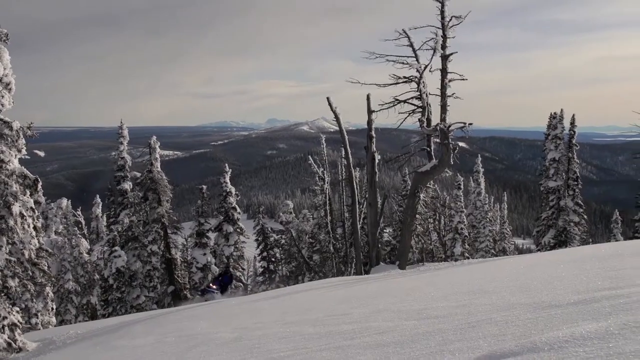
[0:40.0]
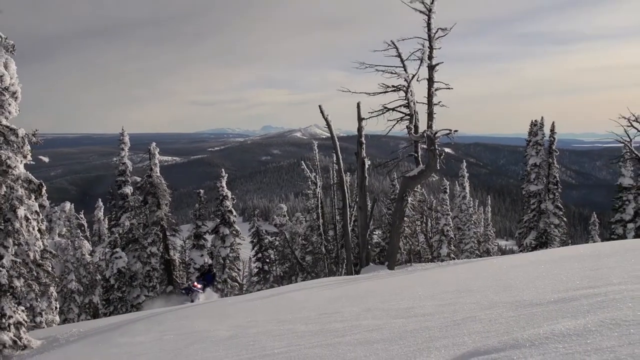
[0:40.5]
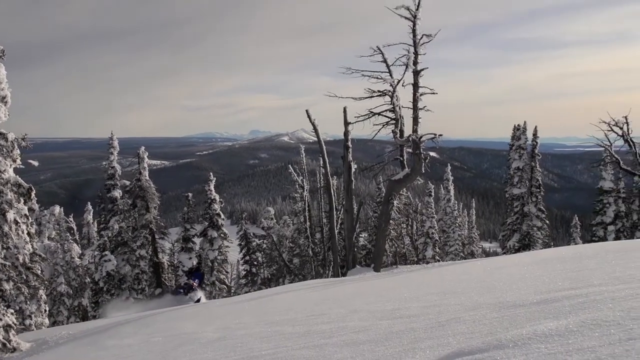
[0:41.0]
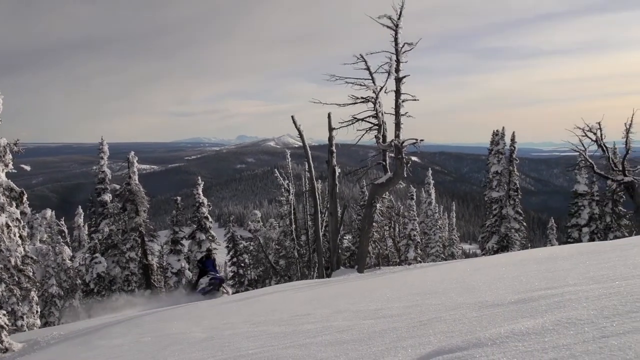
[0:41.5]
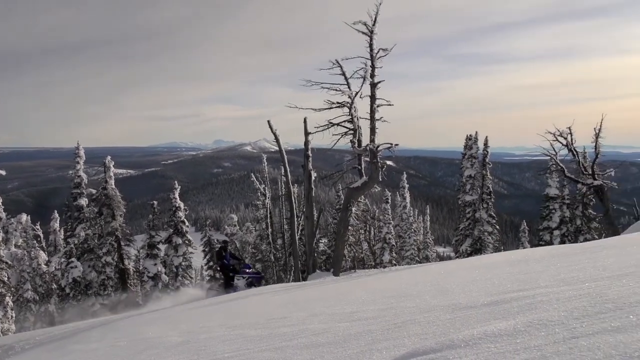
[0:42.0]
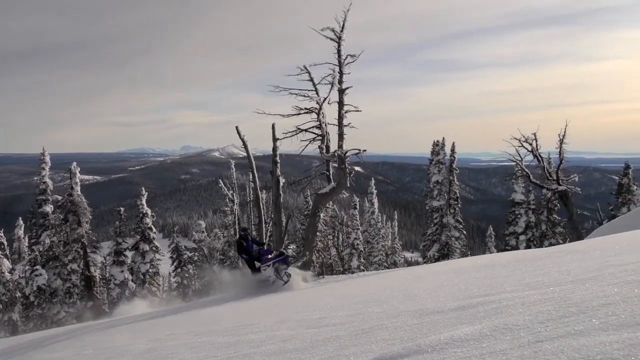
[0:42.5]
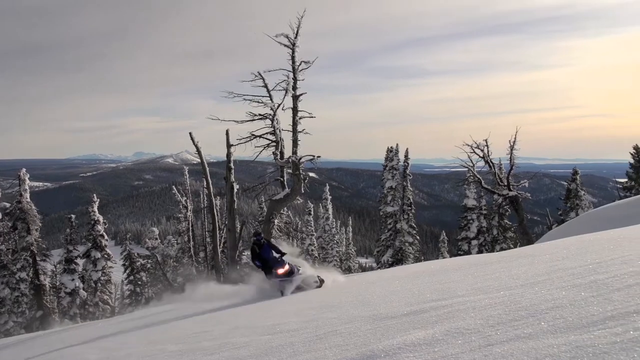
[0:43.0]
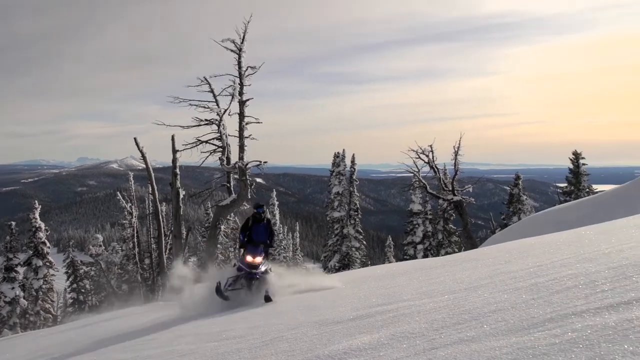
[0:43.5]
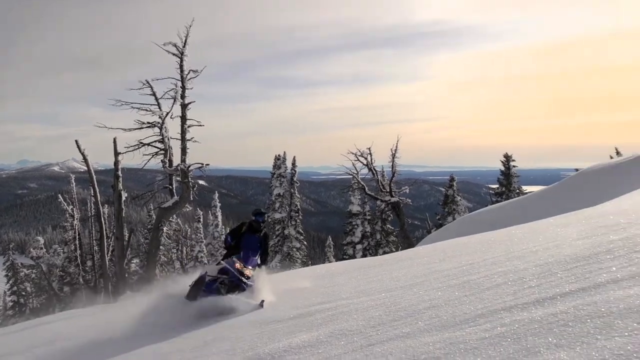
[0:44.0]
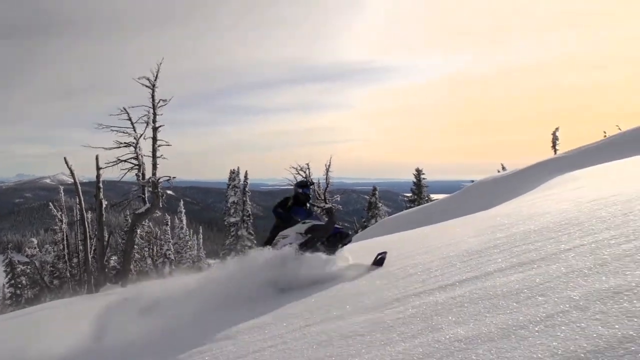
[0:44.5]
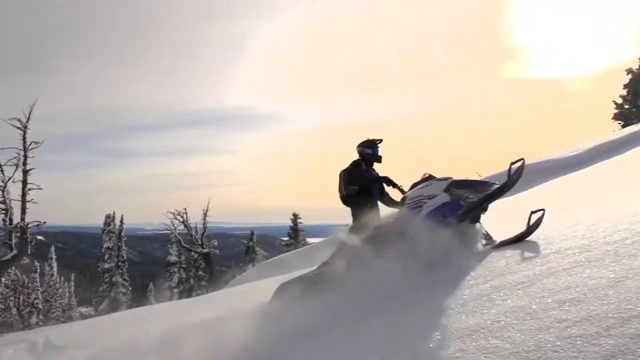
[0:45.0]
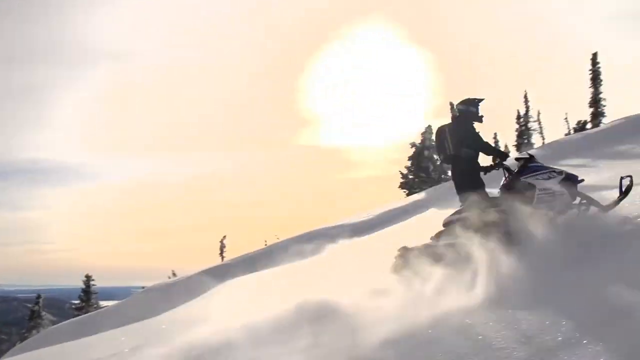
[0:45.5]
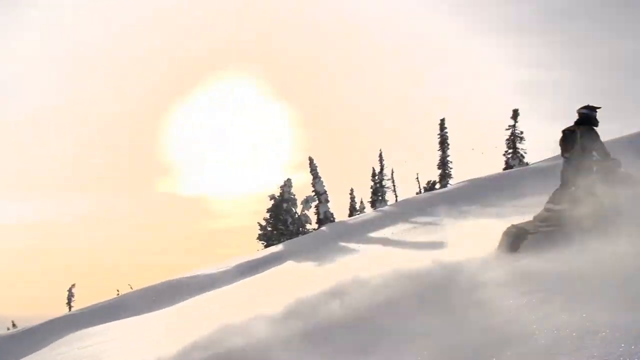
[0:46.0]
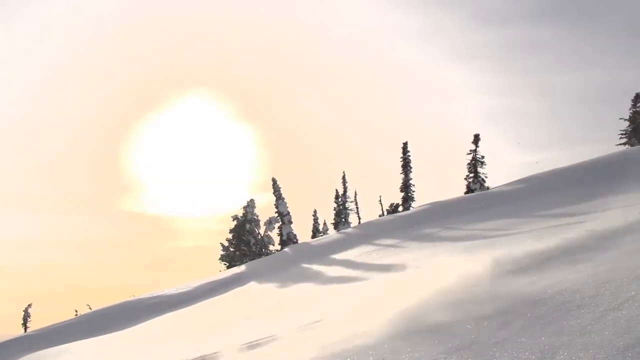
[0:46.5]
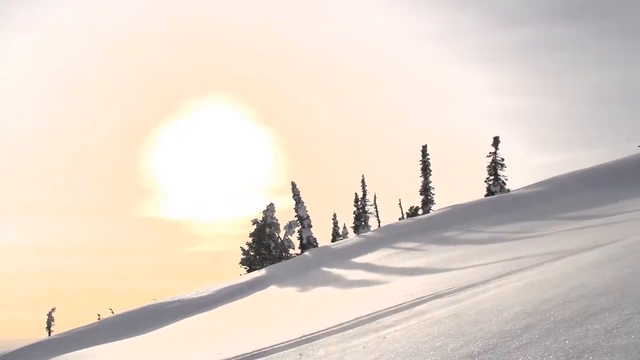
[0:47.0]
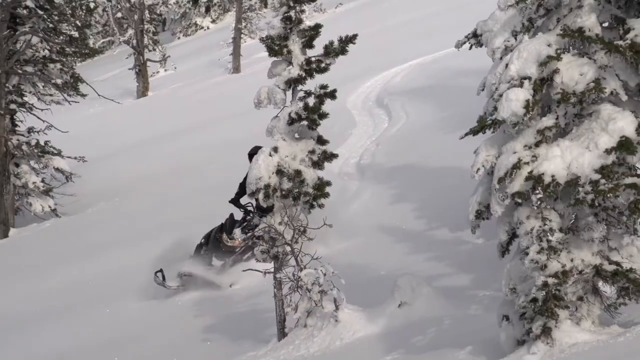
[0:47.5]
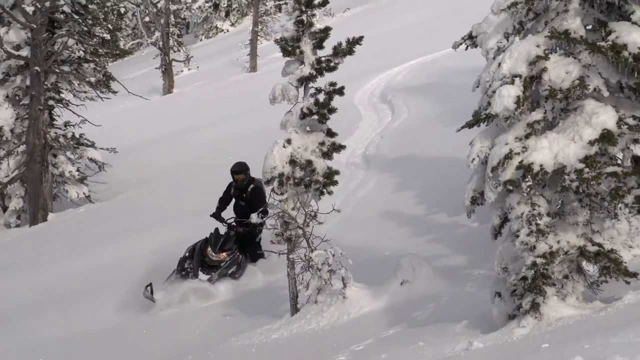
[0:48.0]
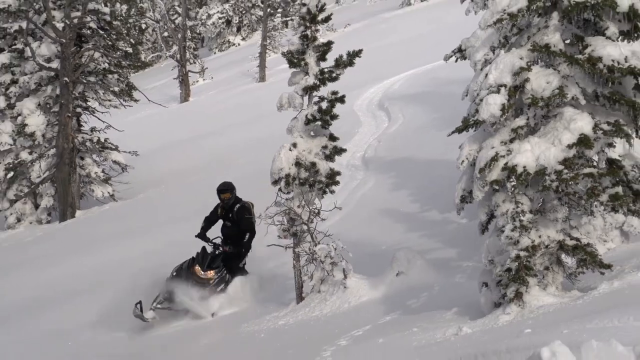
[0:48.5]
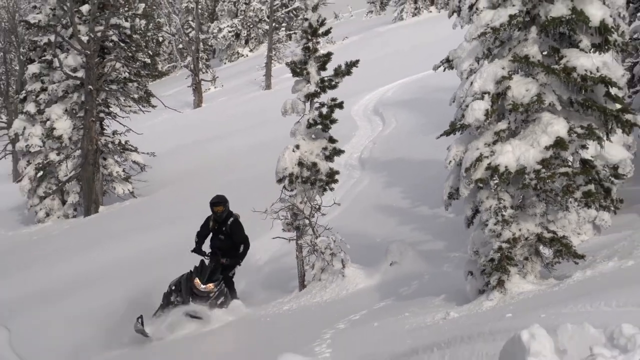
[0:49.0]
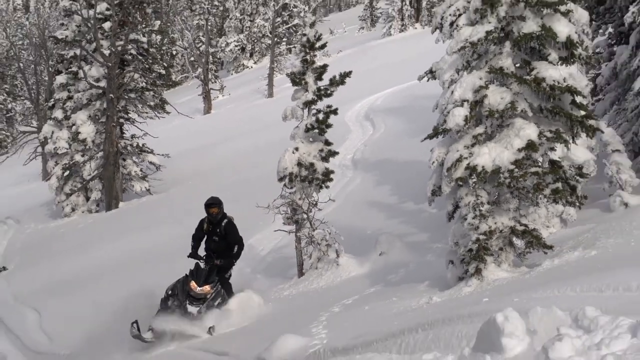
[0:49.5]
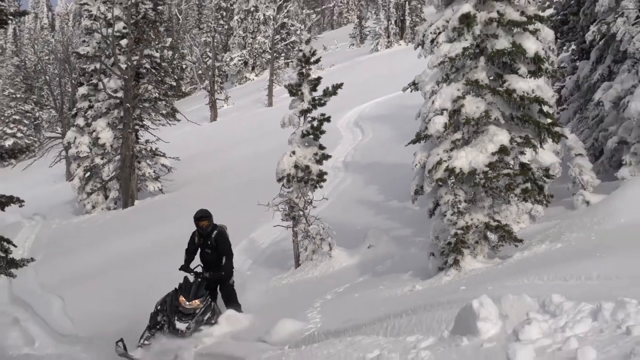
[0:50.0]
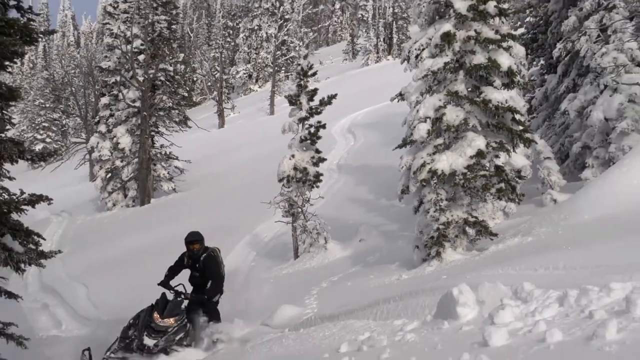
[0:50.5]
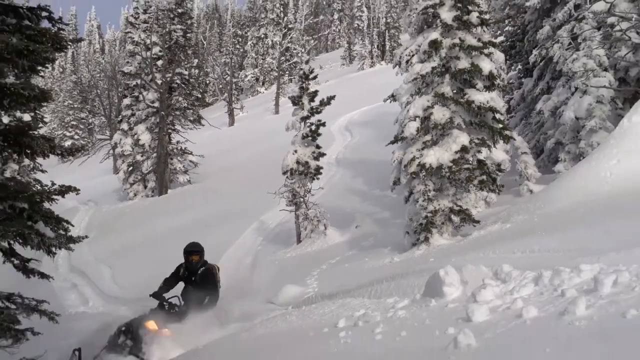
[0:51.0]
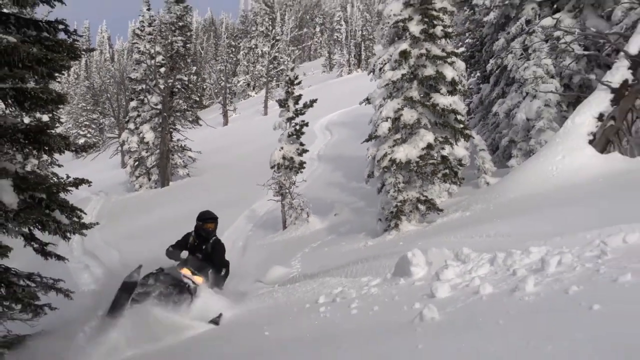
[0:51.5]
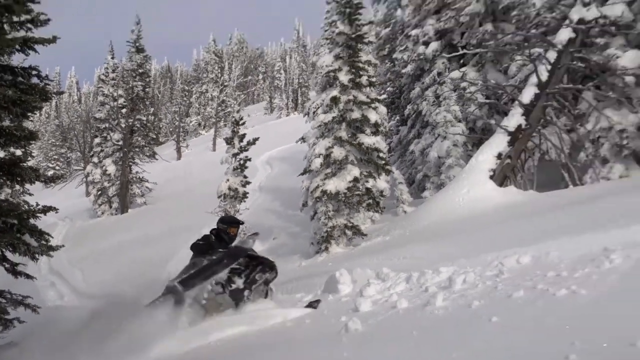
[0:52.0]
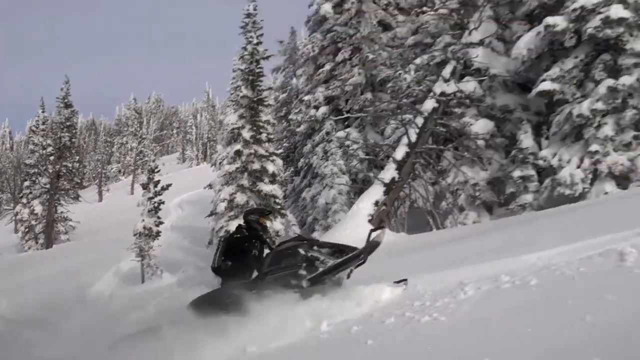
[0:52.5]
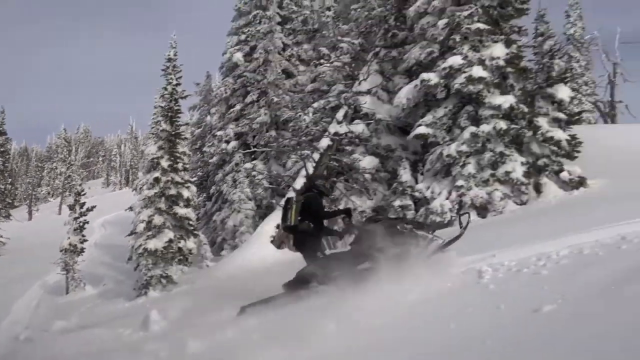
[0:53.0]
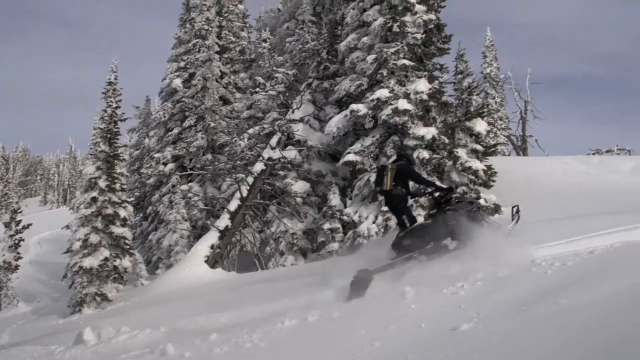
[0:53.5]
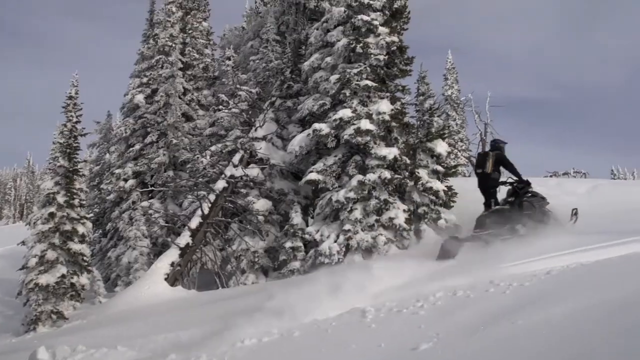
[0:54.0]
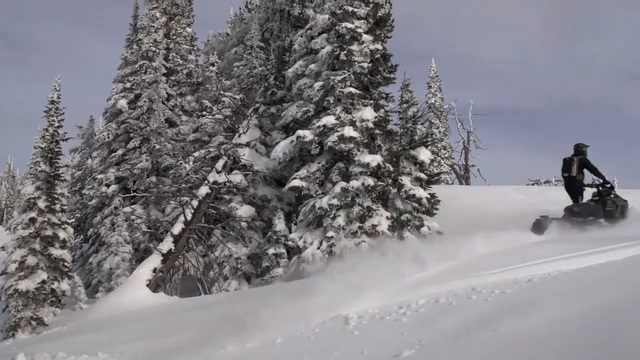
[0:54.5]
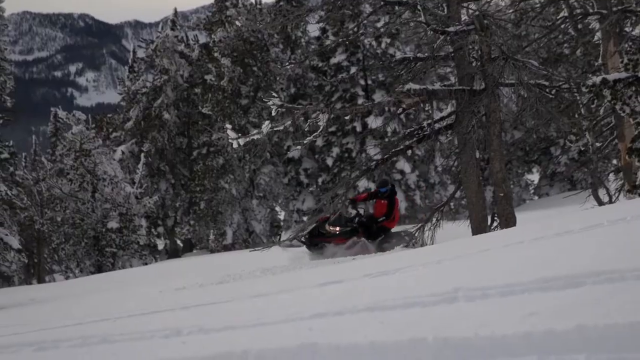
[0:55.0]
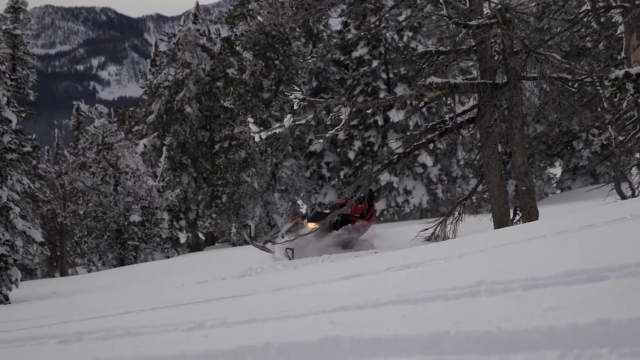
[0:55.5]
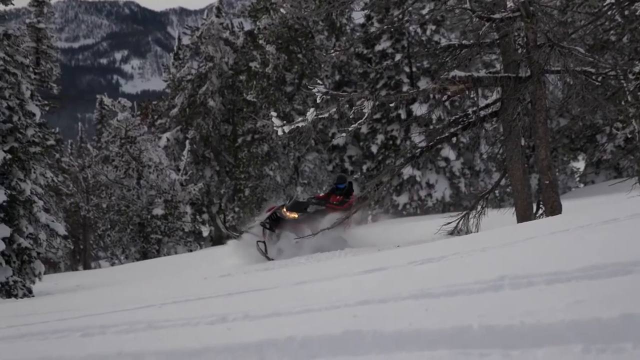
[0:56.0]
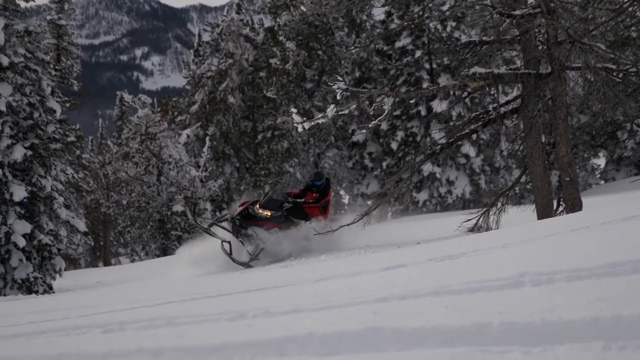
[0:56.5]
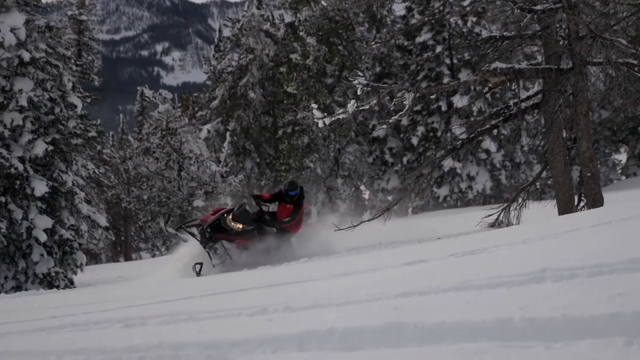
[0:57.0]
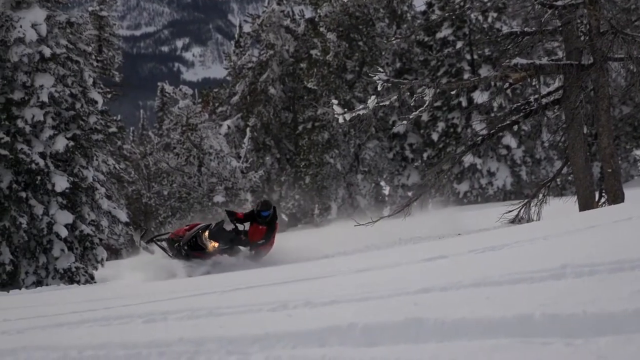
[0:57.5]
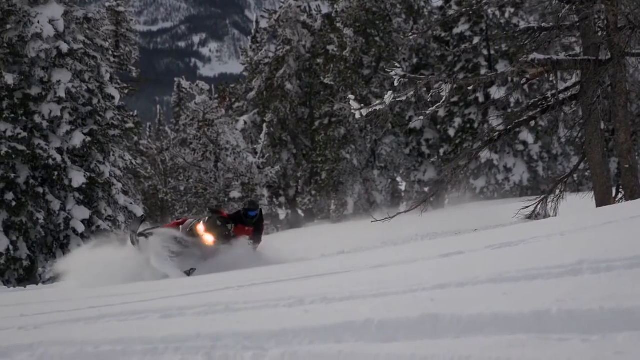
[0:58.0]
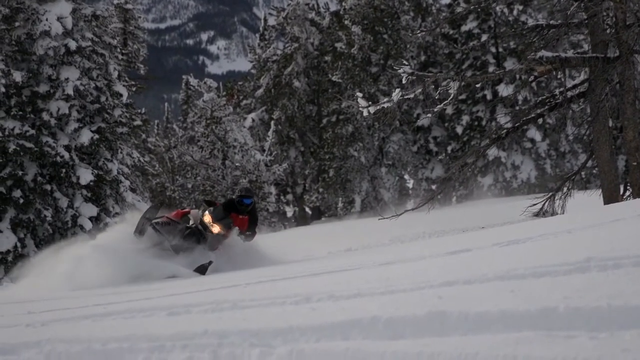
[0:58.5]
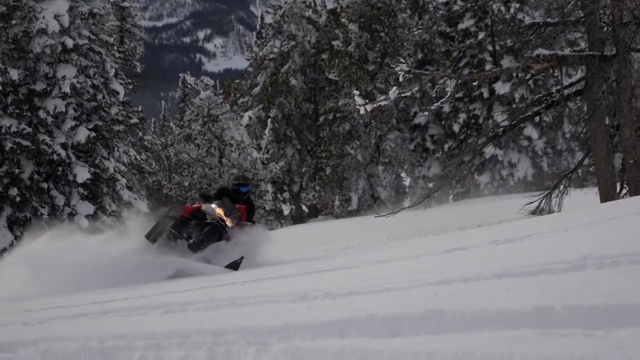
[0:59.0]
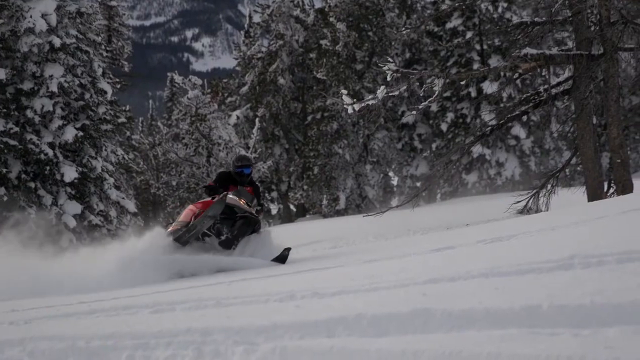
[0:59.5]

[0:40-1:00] A mountainous terrain appears, with lots of snow in the foreground and background and probably thousands and thousands of trees, most of which look like evergreens. Some of the evergreens in the foreground are covered in snow. At the bottom left corner of the screen, a snowmobile and rider drive towards the camera, weaving left and right as they go uphill, and then go off the screen. The scene changes to another snowmobile that looks black, with a rider in all black: pants, top and helmet. He rides down a snow-covered hill, with evergreens all around in the foreground and background, some of them covered in snow. The rider makes a hard left, then goes up a hill. Another snowmobile rider then rides past a couple of evergreen trees, making a left turn so hard that half of his snowmobile comes off the ground, with one ski up in the air. This rider also wears black pants, a black top and a black helmet.